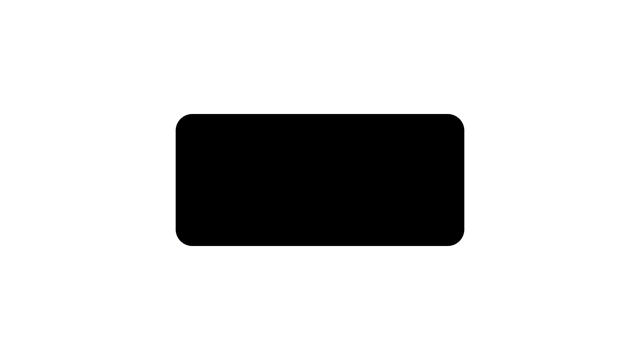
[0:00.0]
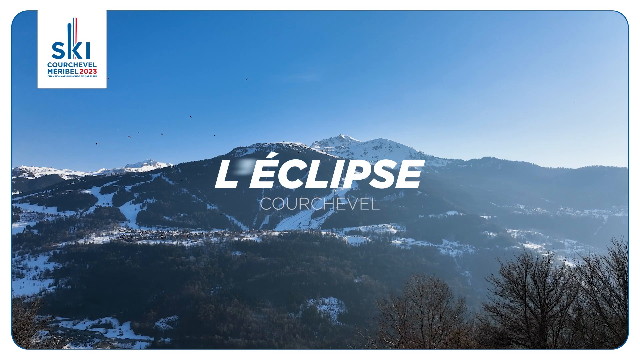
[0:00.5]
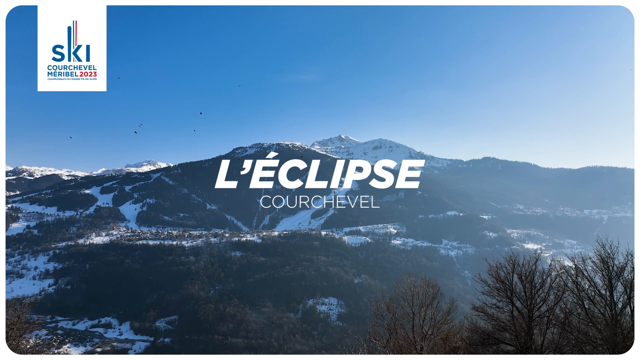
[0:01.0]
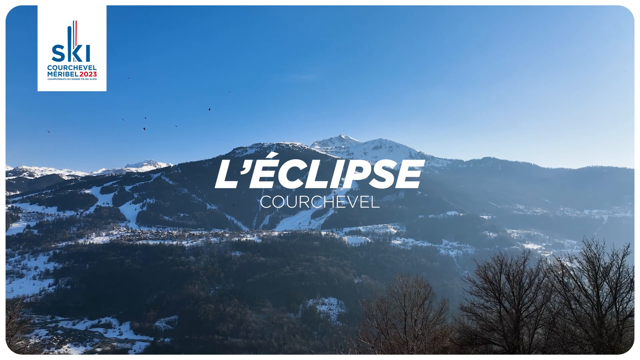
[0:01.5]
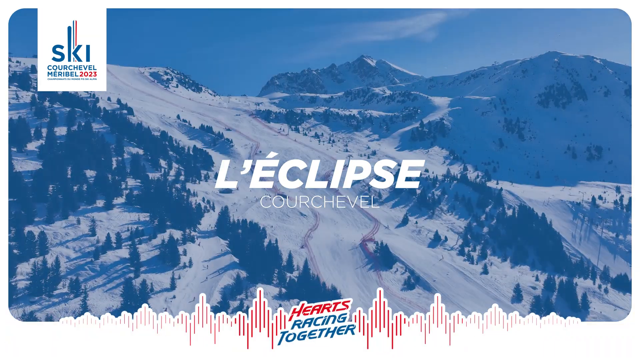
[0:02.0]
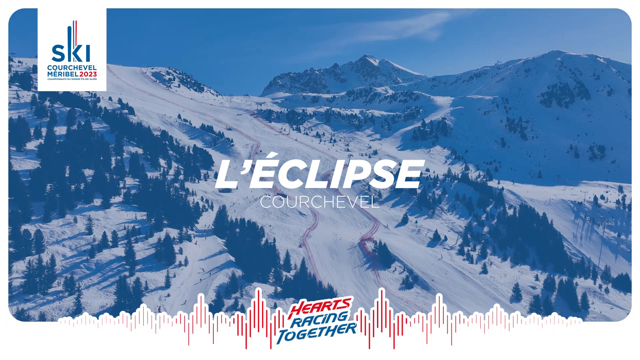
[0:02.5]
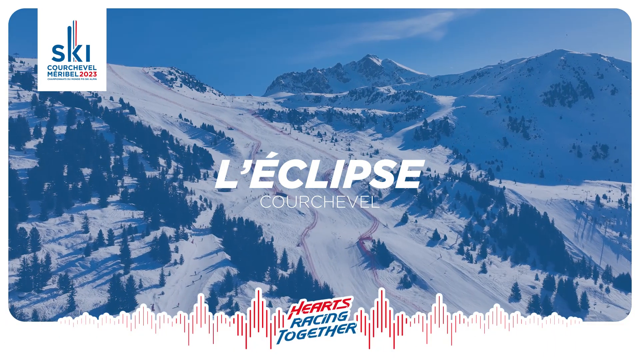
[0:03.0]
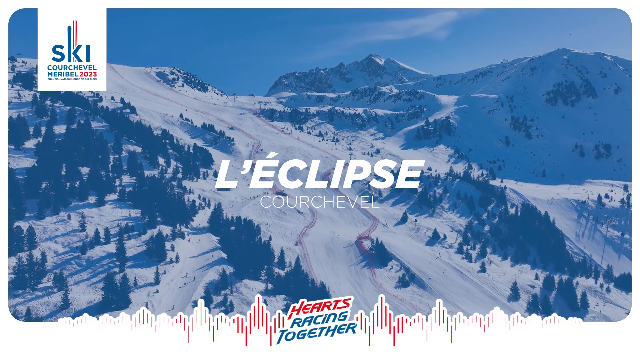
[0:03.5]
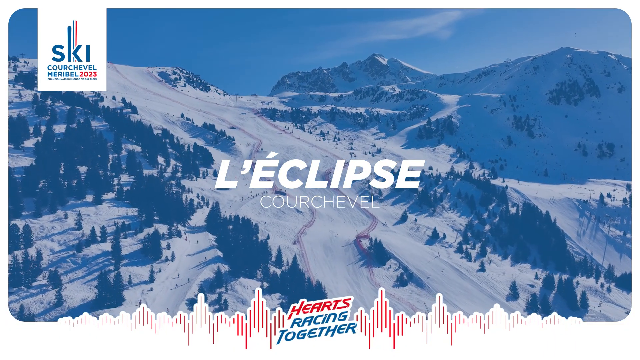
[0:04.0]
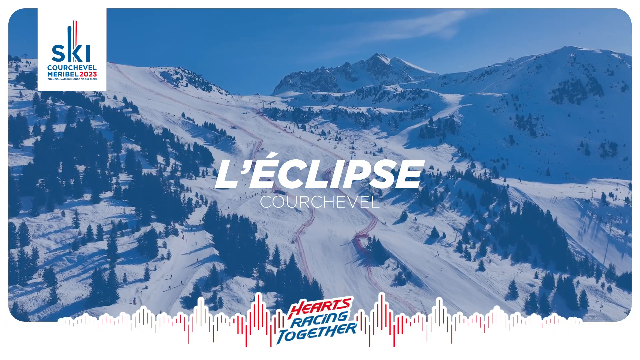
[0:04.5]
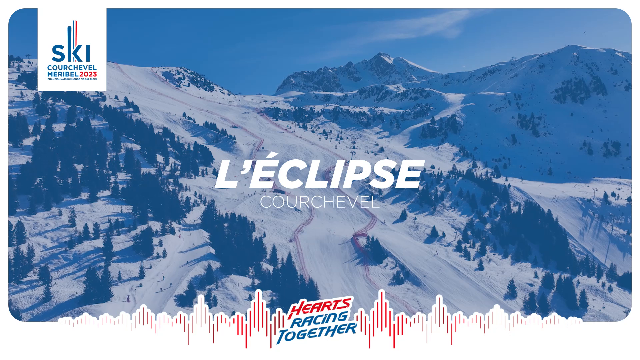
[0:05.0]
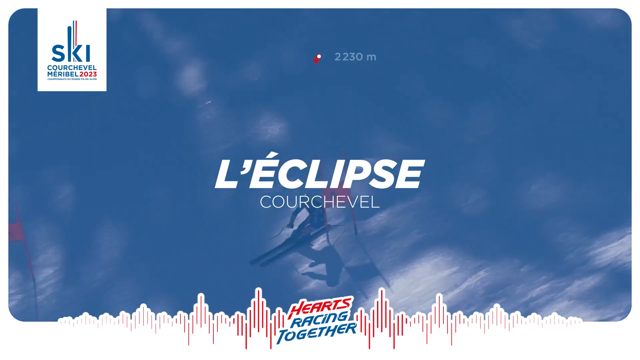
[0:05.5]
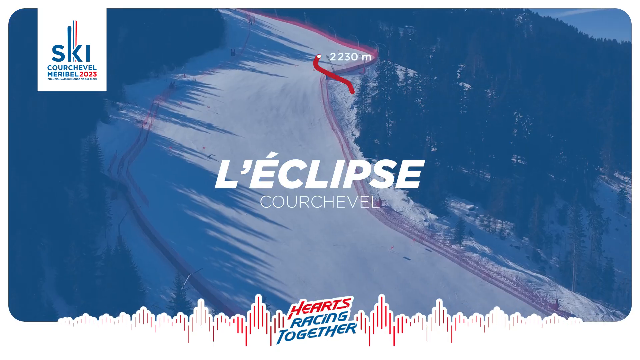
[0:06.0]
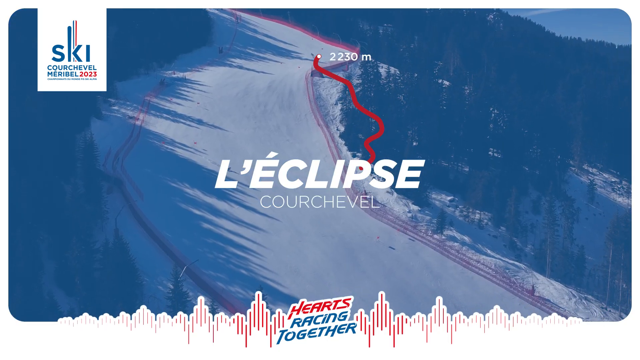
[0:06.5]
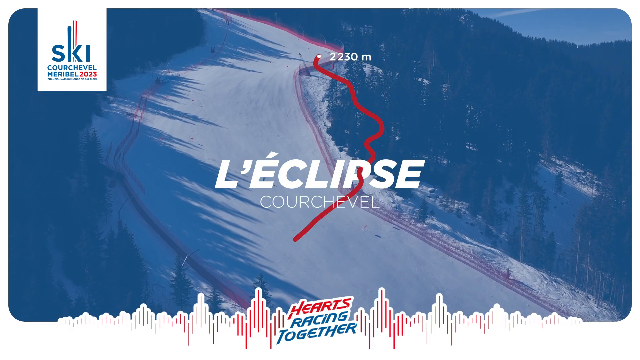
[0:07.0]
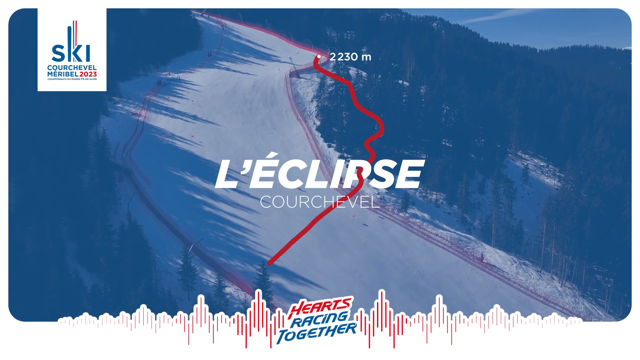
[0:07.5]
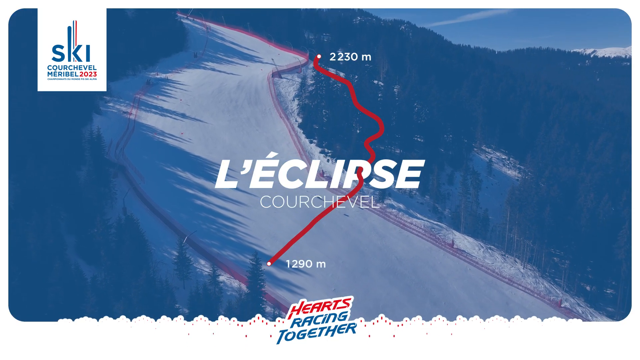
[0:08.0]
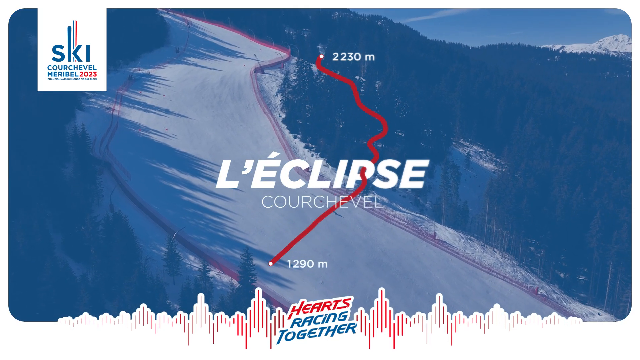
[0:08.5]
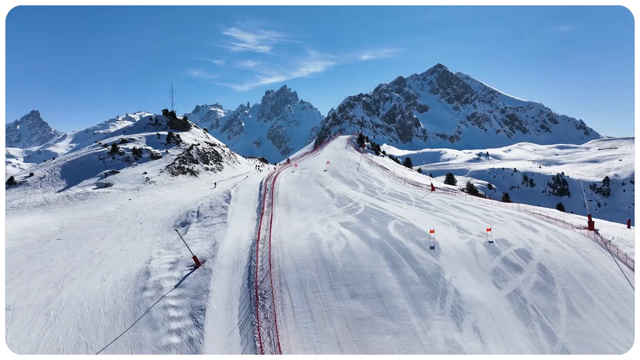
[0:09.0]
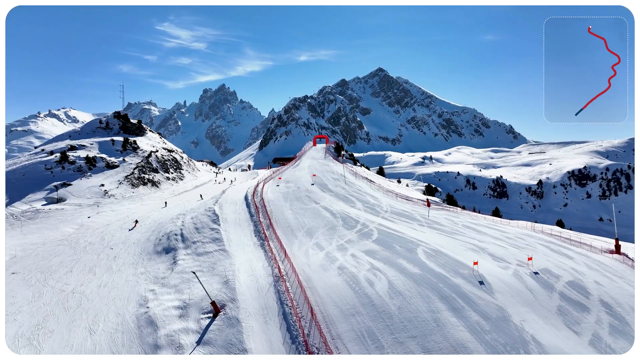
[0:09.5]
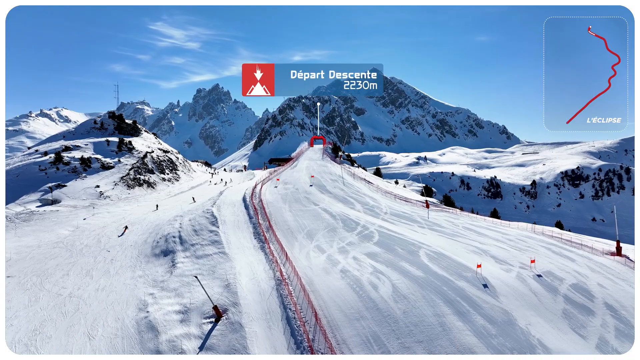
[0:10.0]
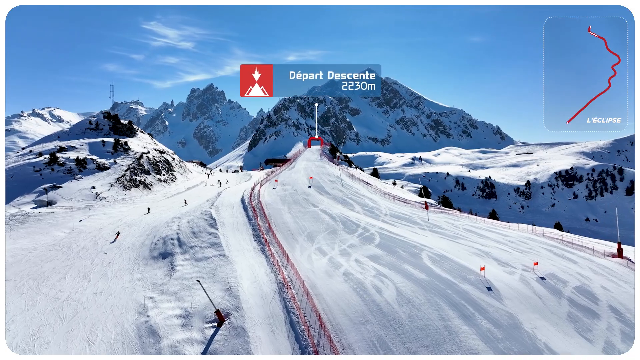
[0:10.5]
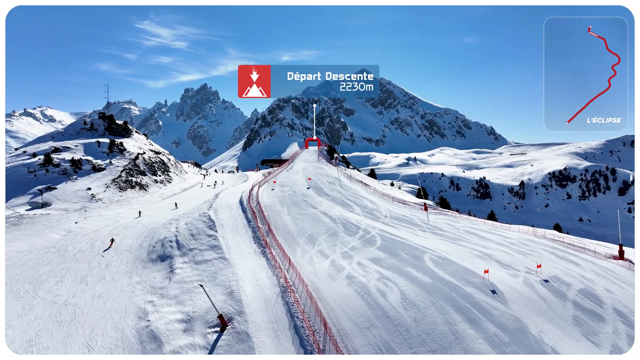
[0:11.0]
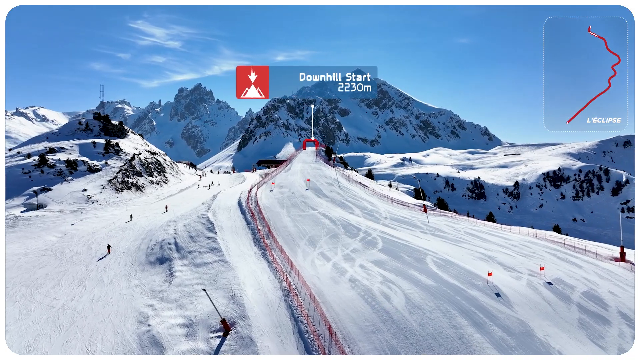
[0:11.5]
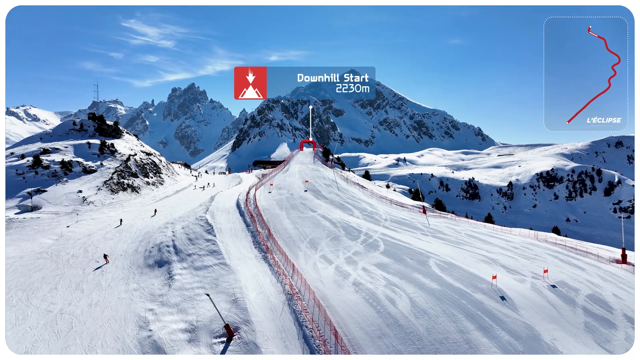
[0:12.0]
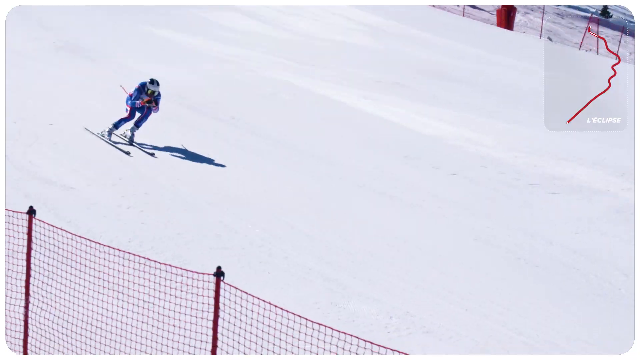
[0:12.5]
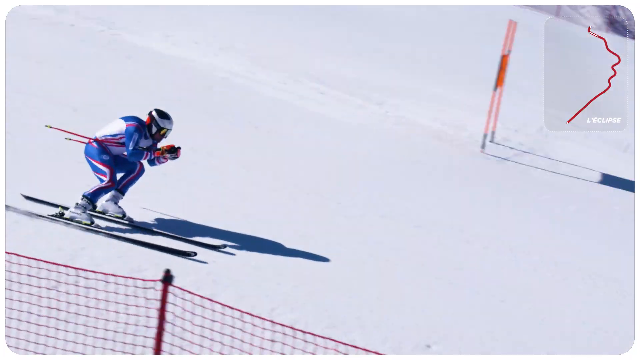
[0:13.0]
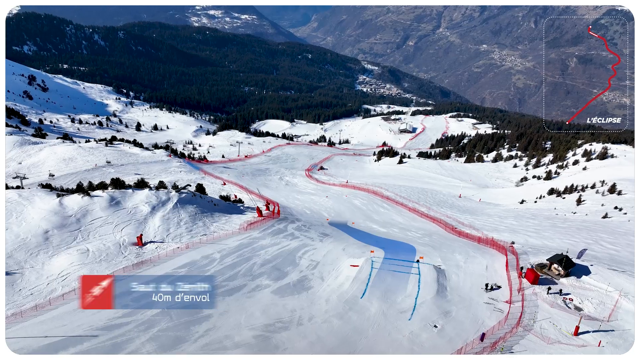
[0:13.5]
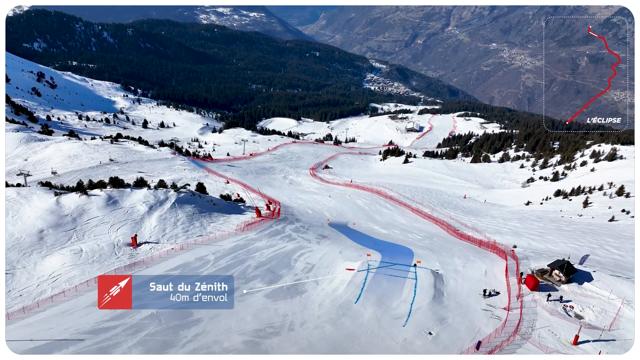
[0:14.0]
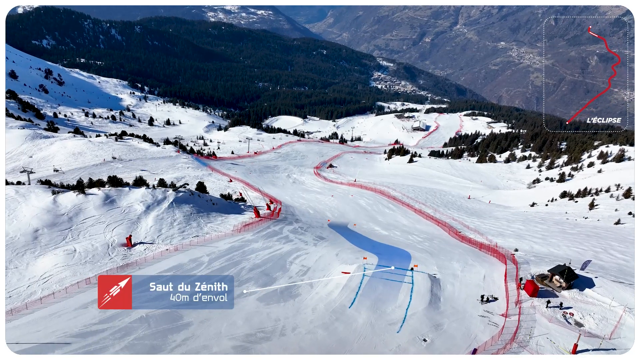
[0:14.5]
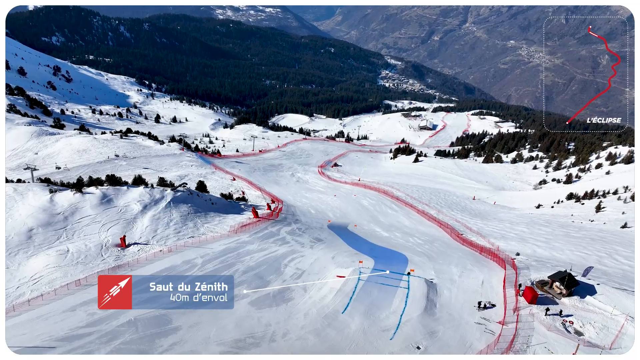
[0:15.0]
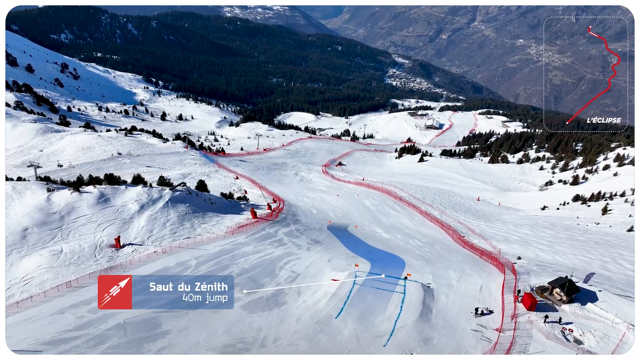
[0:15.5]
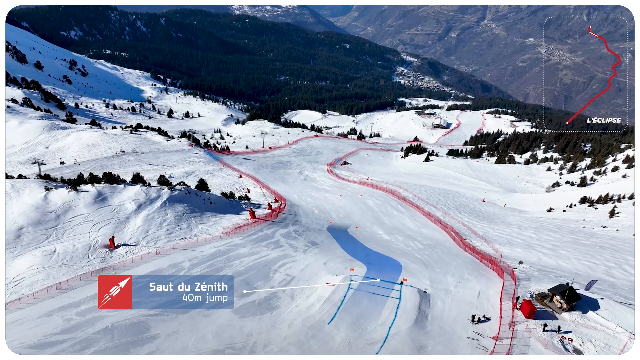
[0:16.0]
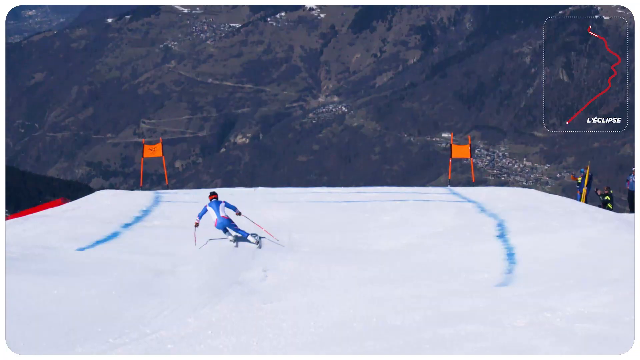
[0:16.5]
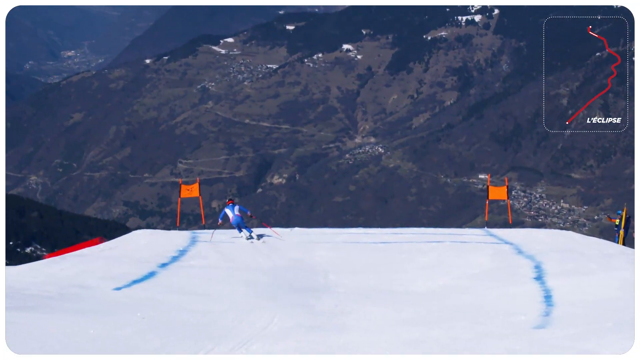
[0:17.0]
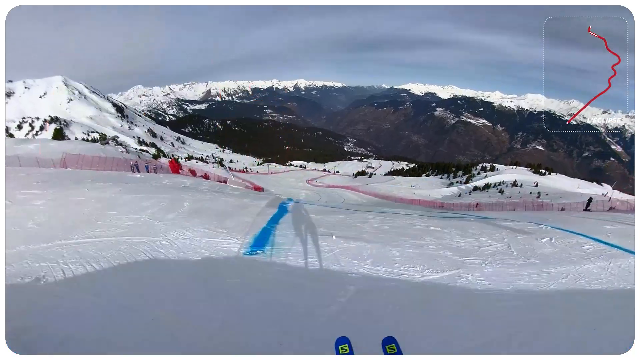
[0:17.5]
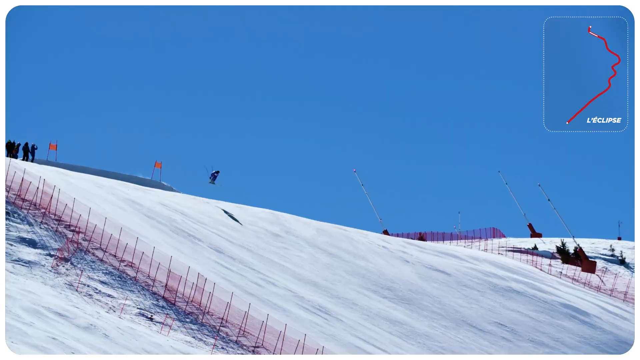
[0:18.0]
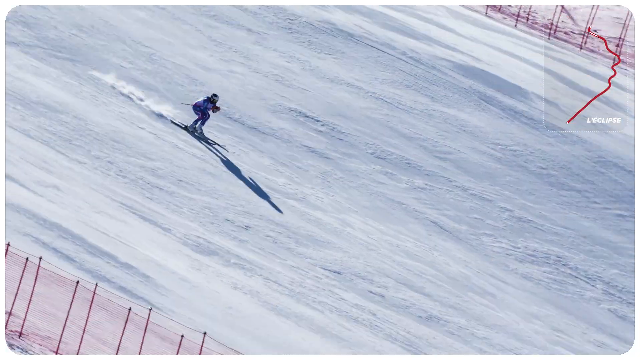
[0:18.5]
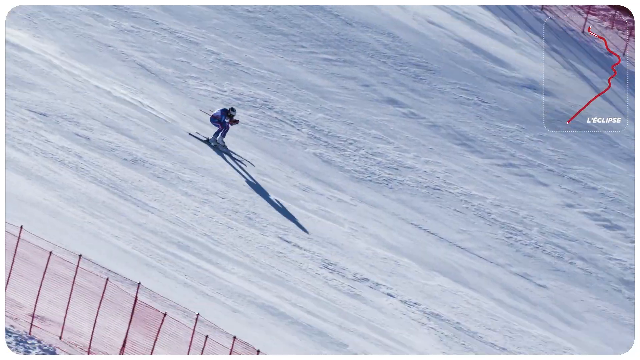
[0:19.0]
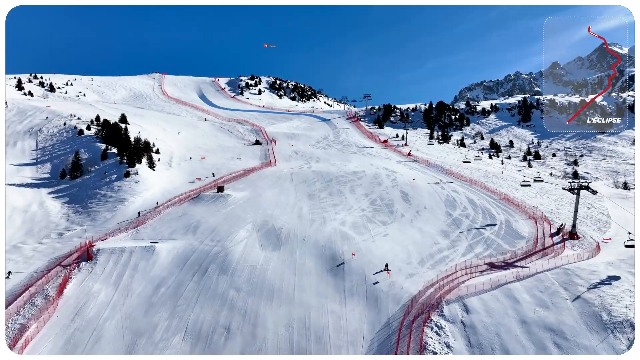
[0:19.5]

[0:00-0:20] The video opens with what looks like an online introduction to a sport, set in the mountains with lots of snow. It first shows the elevation, starting at two thousand two hundred and something and going down to one thousand, a very big, steep drop from top to bottom. A competitor then goes down the course, apparently a skier in a very aerodynamic, skin-tight outfit. At a certain point there is a small jump where the skier gets some air, then comes back down and lands on the snow on their skis.